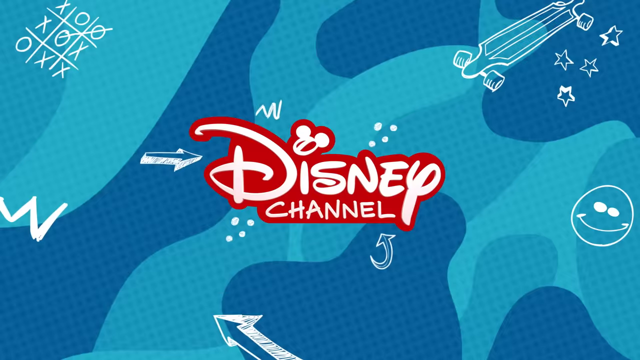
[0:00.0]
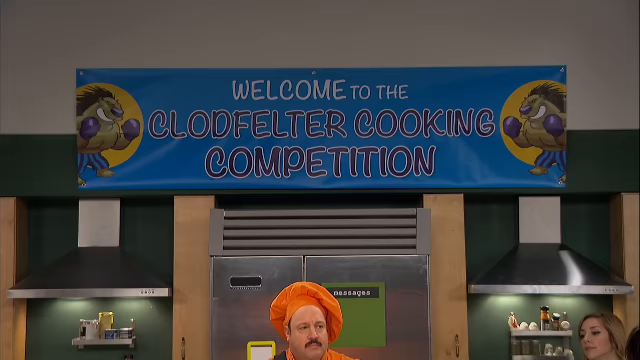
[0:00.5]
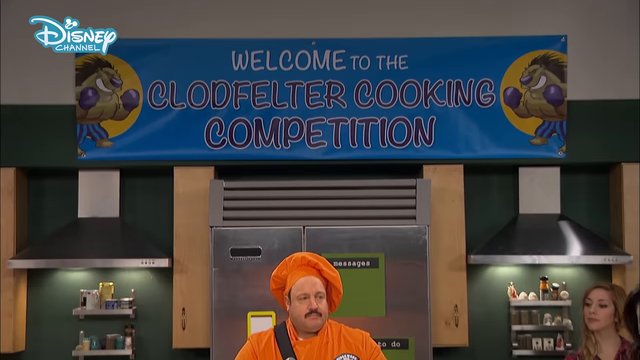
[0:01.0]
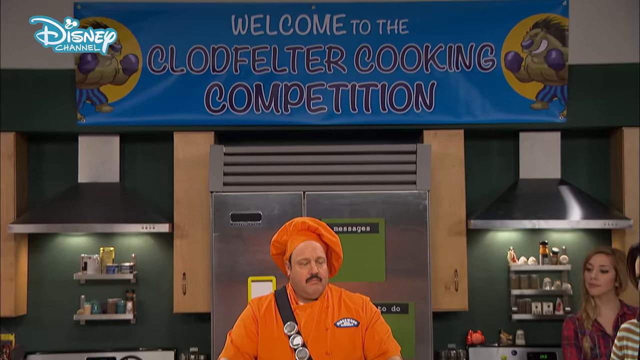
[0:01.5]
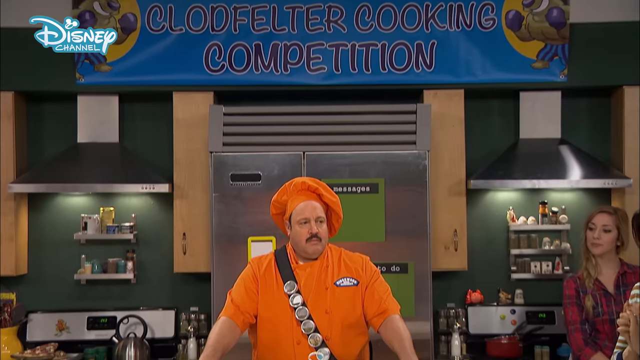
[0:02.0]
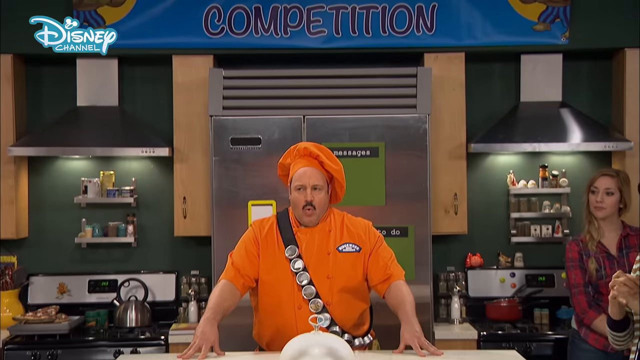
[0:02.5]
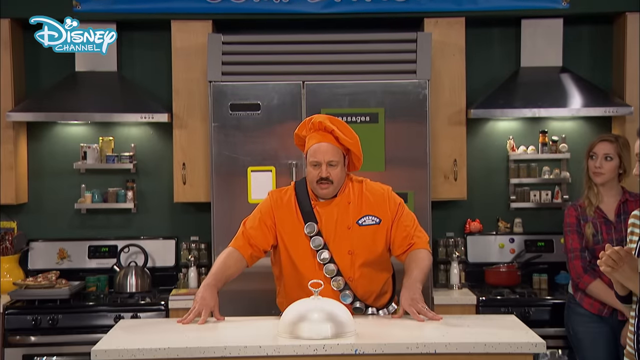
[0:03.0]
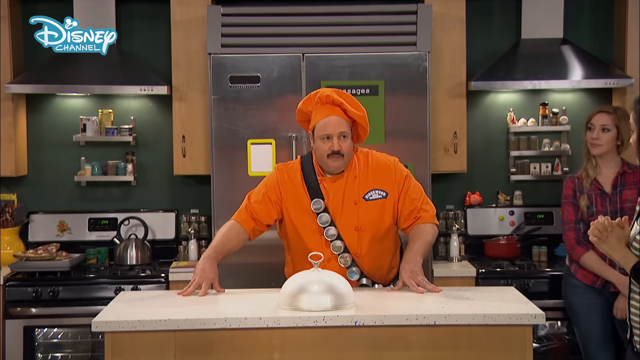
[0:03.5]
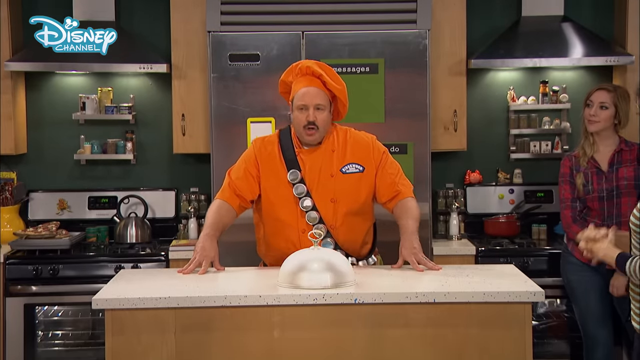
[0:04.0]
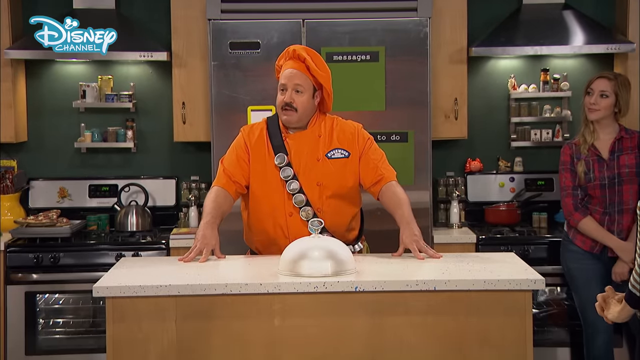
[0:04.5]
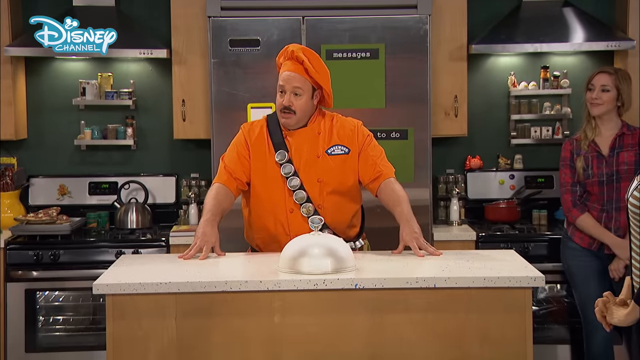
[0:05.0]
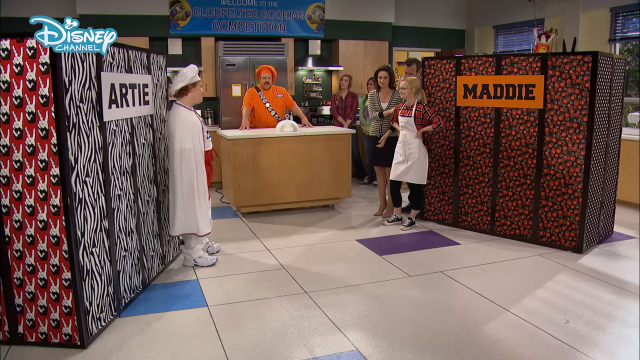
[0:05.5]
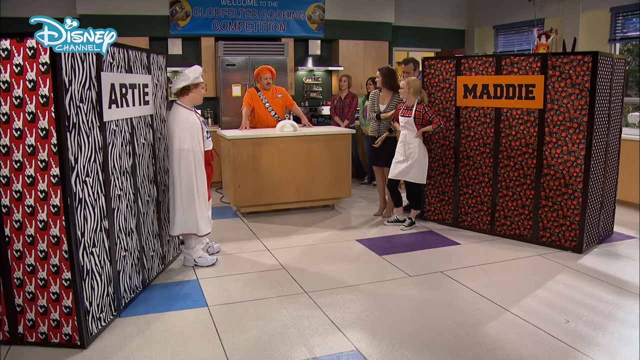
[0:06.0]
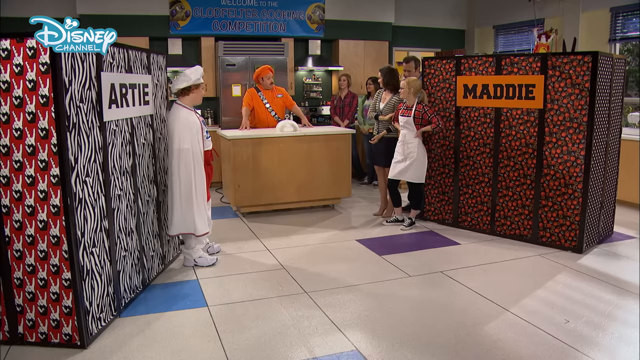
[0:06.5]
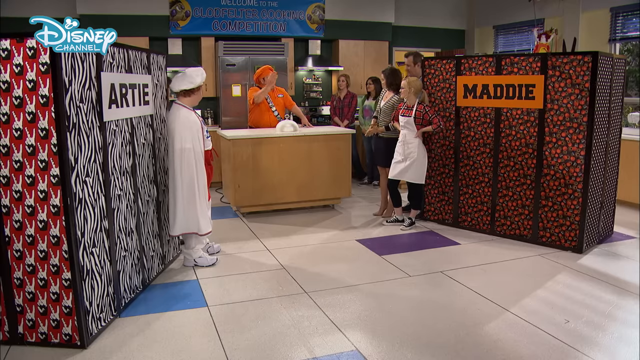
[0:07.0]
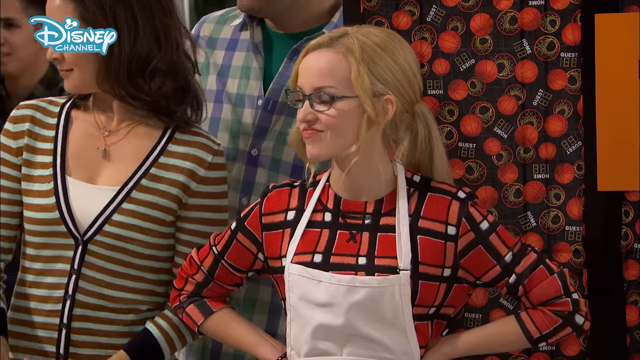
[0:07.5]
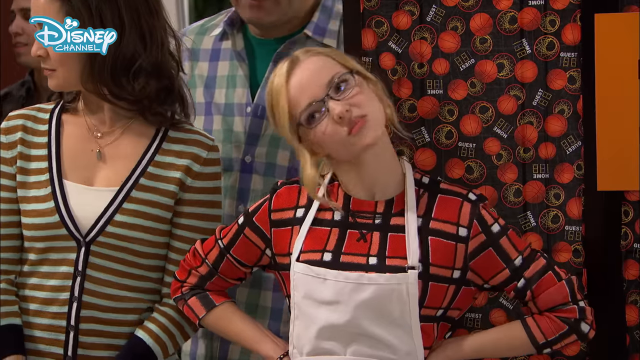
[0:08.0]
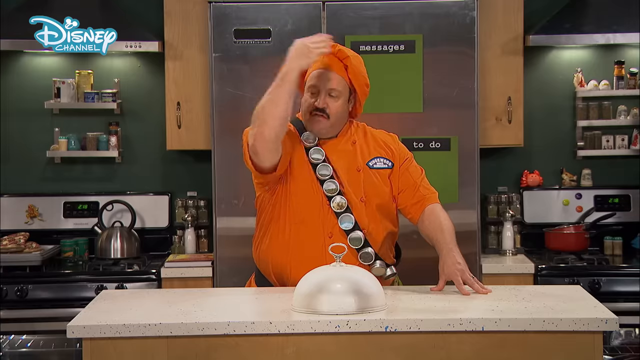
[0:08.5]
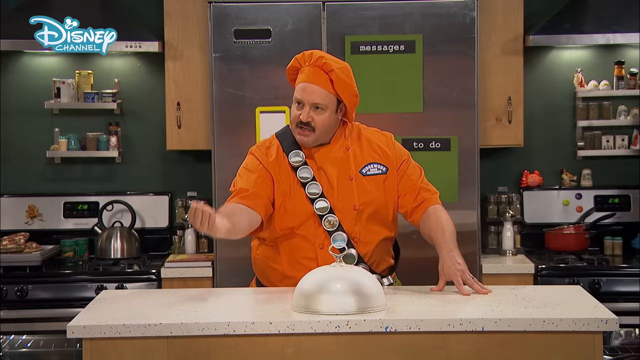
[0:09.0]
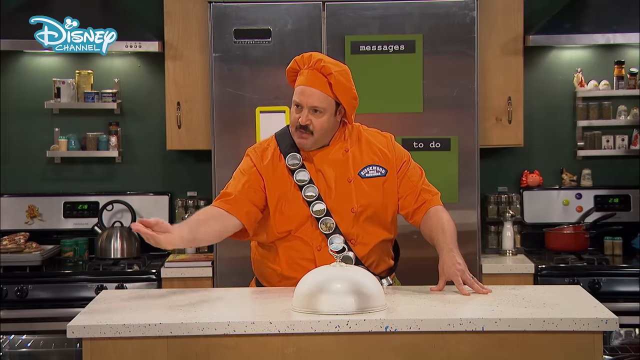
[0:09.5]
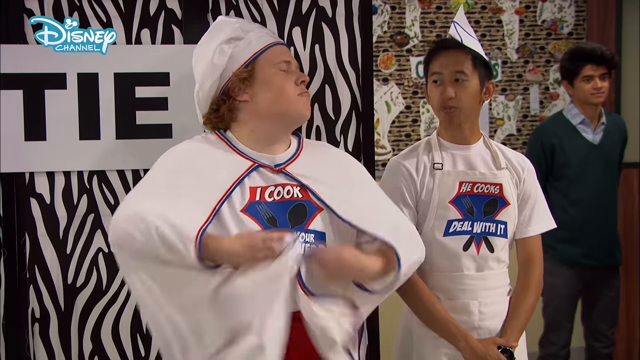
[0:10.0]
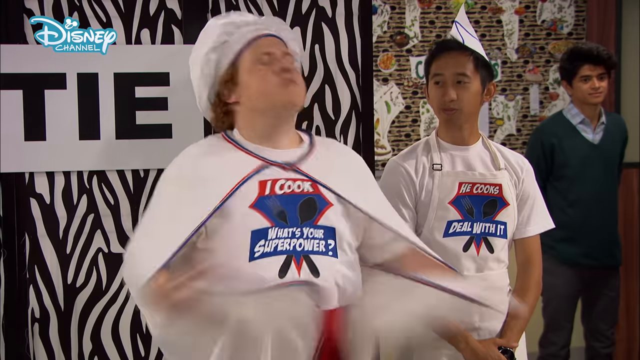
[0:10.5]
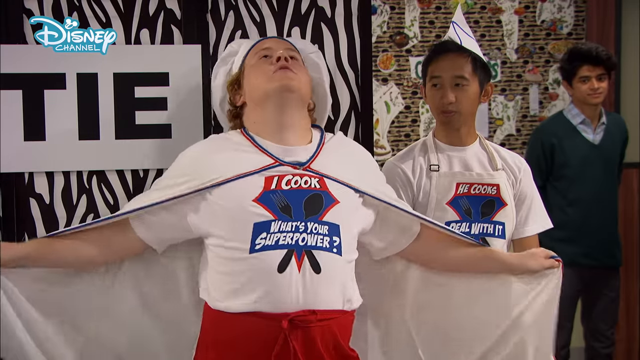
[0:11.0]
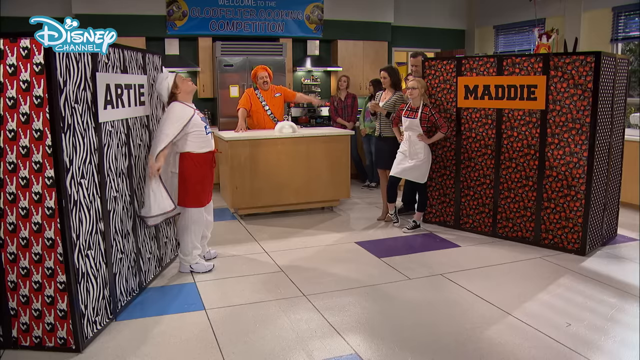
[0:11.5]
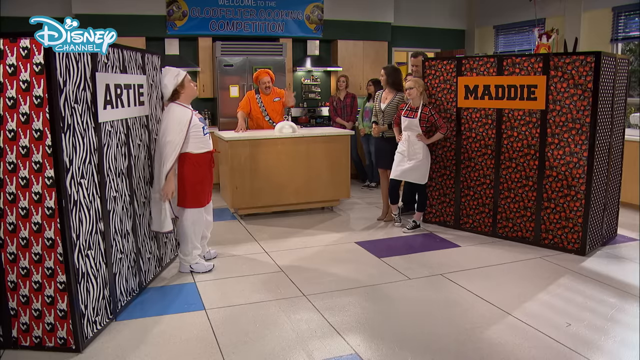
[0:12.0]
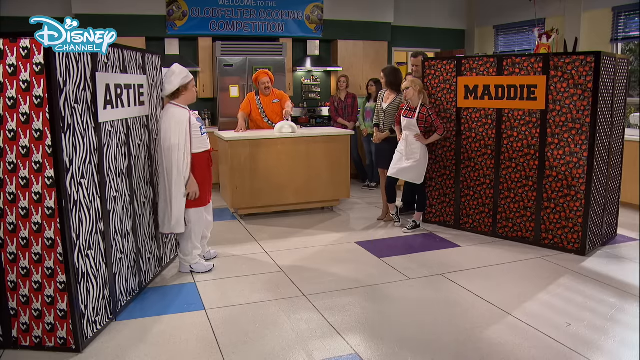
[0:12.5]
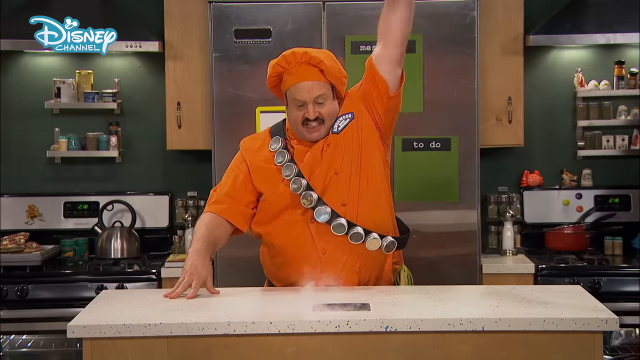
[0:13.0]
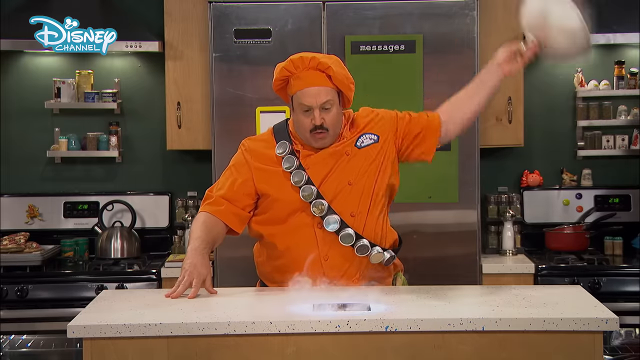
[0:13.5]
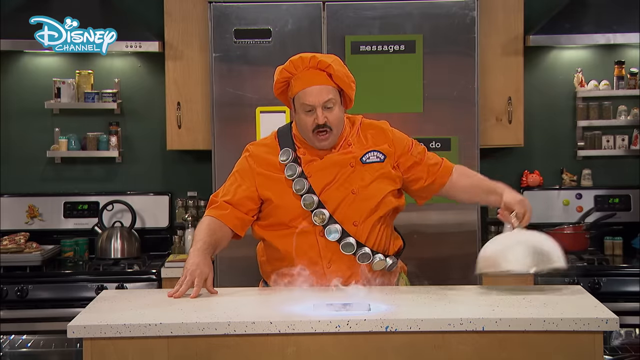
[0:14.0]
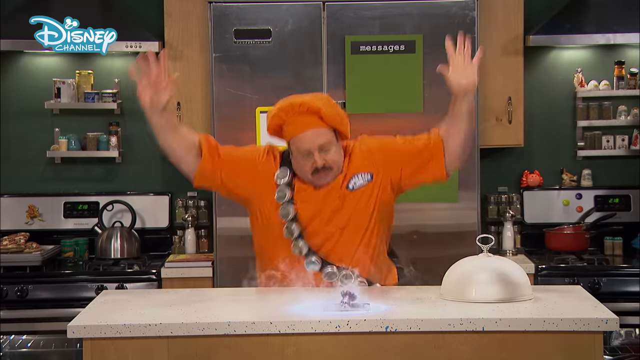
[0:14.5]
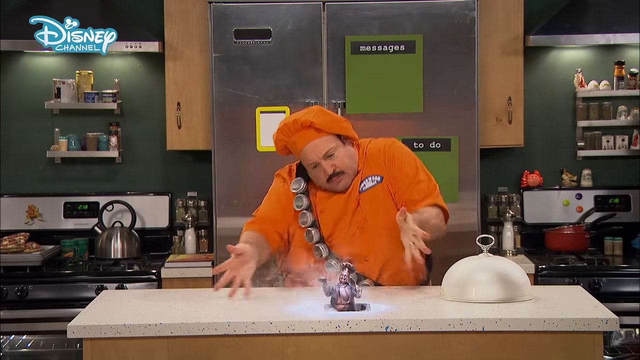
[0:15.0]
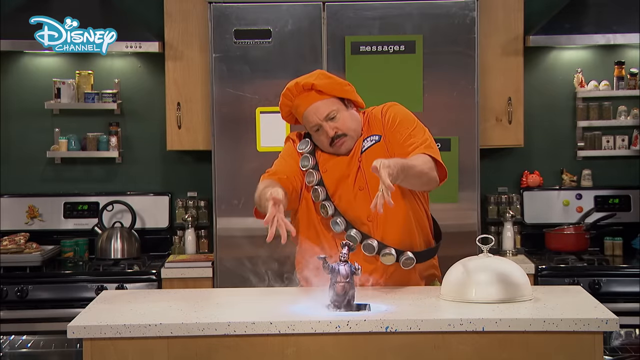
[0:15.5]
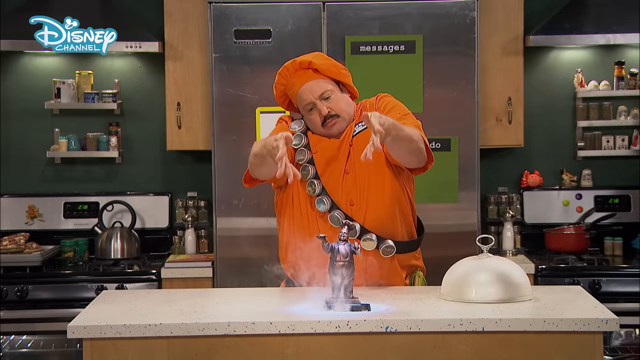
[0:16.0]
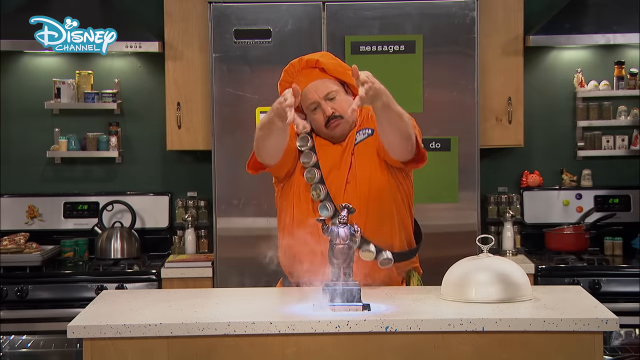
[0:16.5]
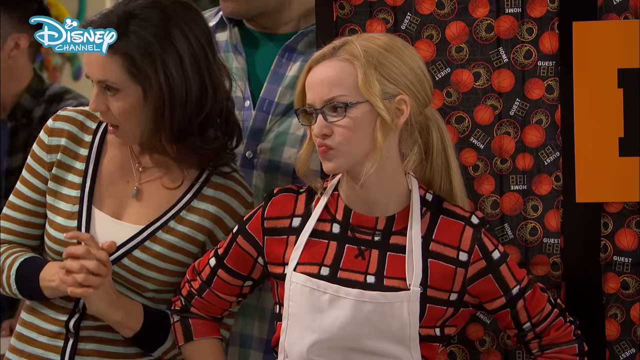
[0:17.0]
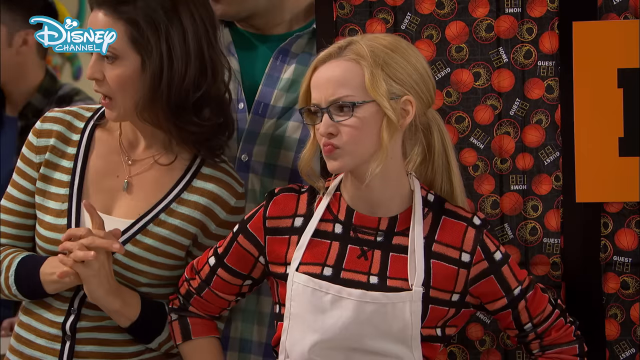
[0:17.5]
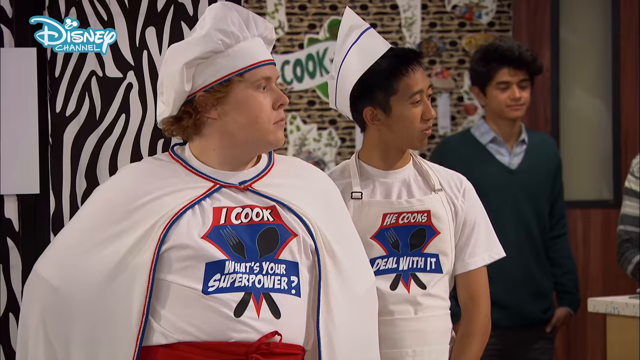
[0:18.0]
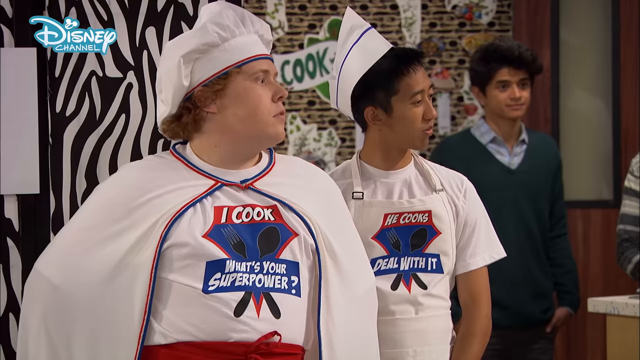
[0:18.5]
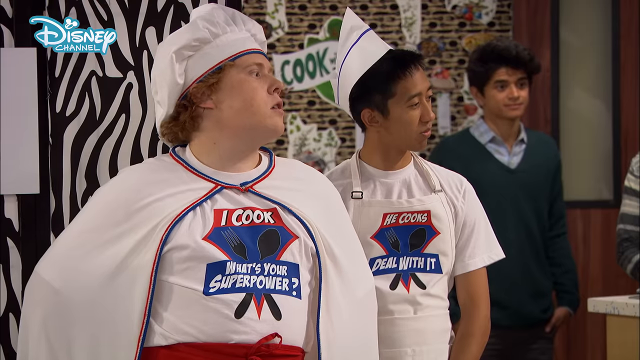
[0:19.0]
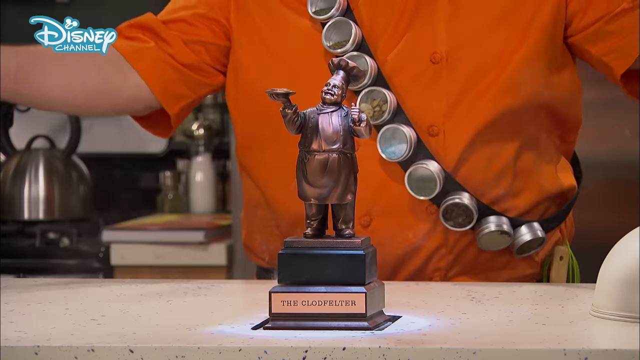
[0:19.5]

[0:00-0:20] The video is from the Disney Channel and shows what looks to be a cooking competition. A man wears an orange outfit with an orange chef's hat. He brings a little statue of a man up through a hole in the table. Kids competing in the contest, both girls and boys, are in the video, wearing what look to be chef's aprons; some of them don't look very happy with what the man is doing. In the upper left-hand corner of the screen, where it says "Disney Channel", a tic-tac-toe board is drawn with a line going through two of the O's. The background behind the words "Disney Channel" is light blue and dark blue with drawings on it, such as a skateboard, stars, a smiley face and arrows.